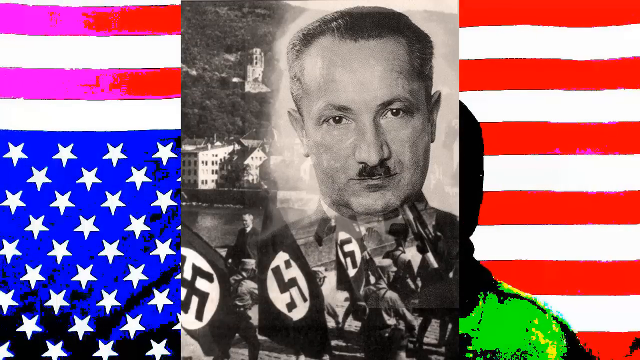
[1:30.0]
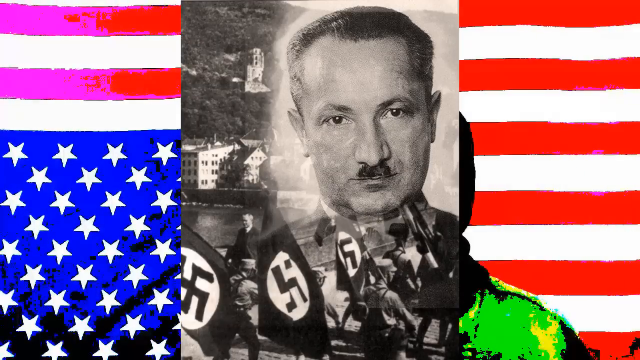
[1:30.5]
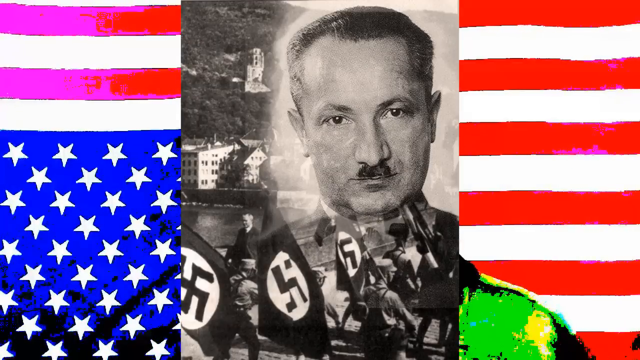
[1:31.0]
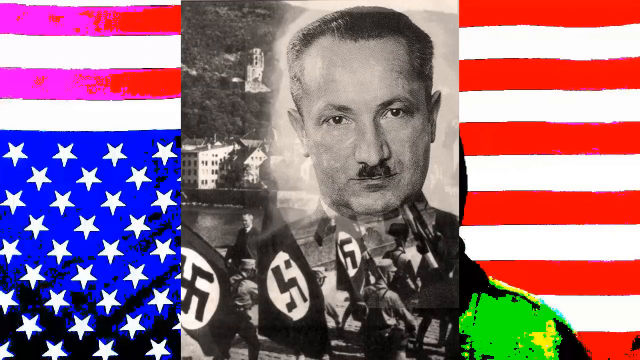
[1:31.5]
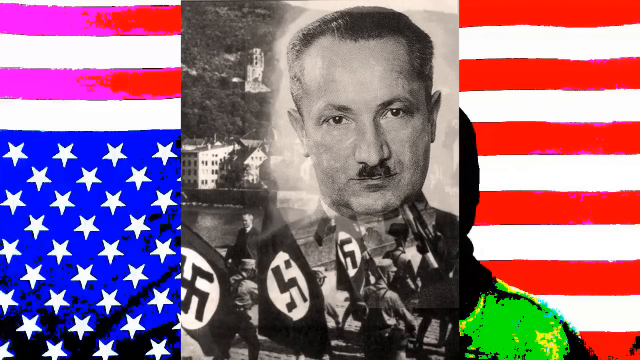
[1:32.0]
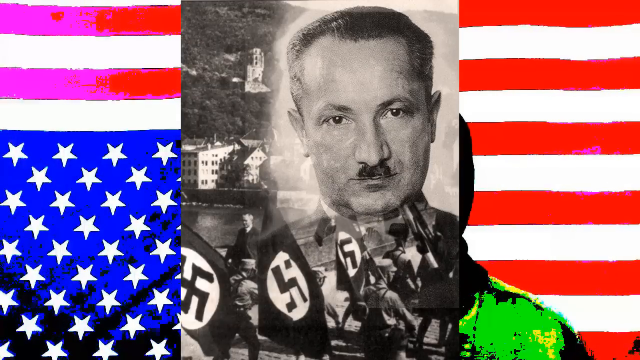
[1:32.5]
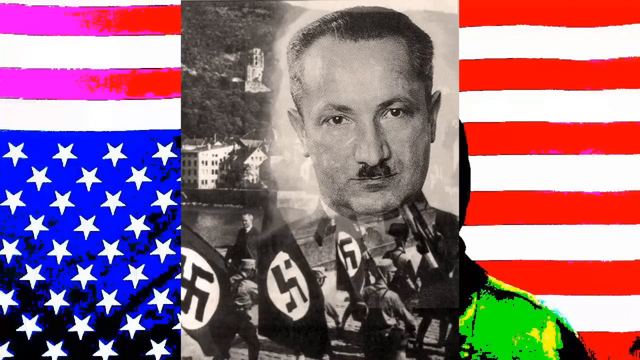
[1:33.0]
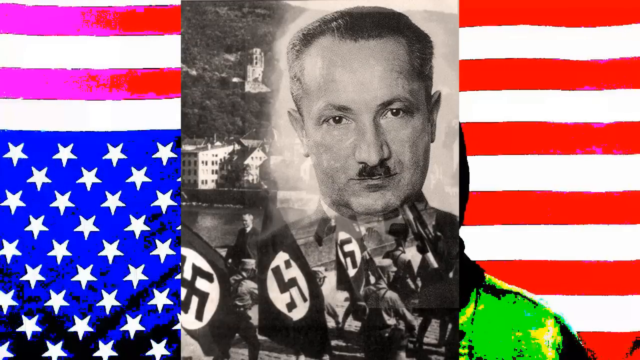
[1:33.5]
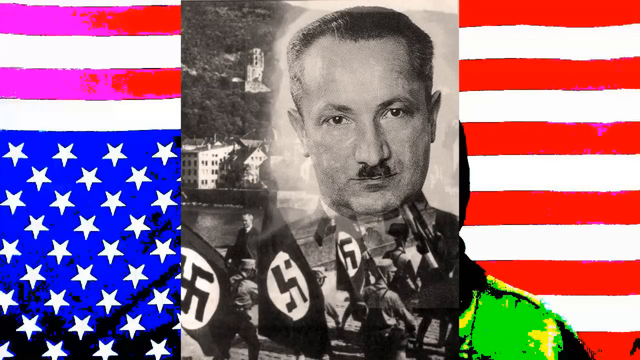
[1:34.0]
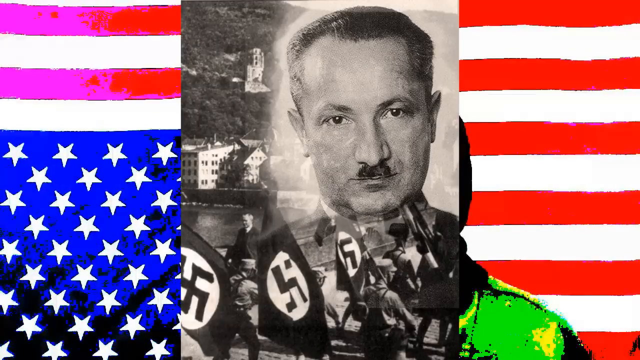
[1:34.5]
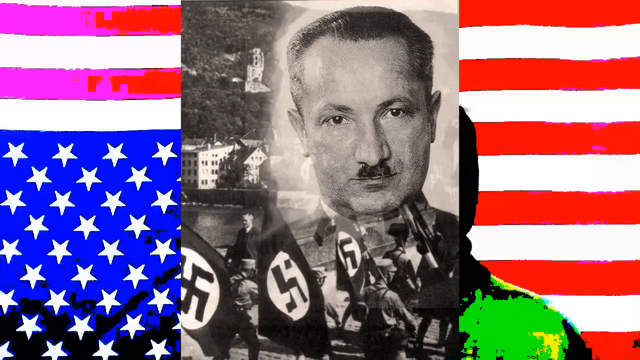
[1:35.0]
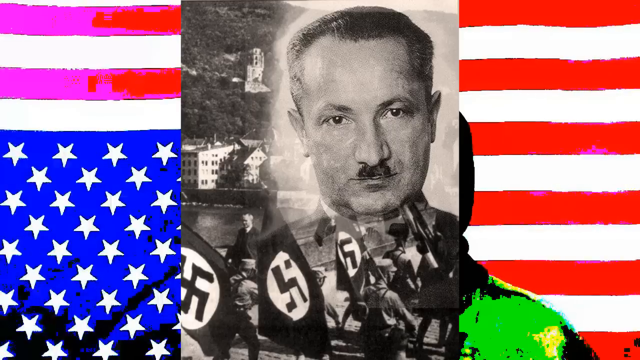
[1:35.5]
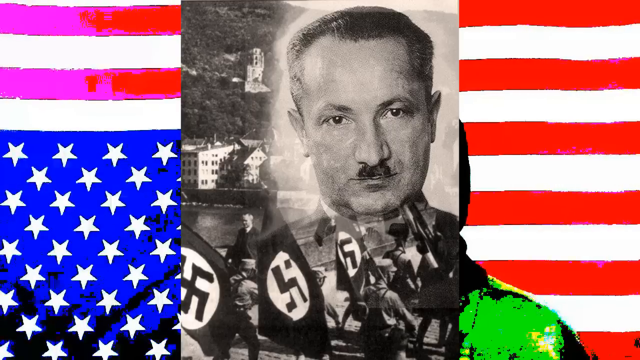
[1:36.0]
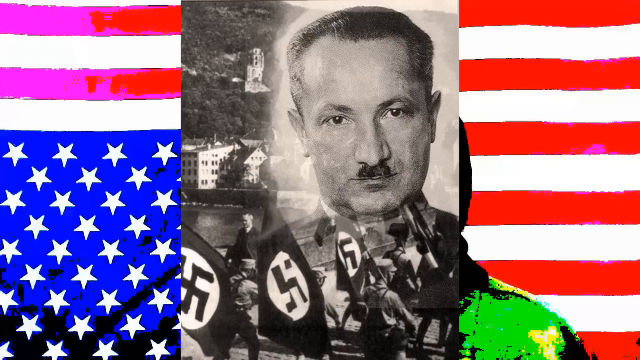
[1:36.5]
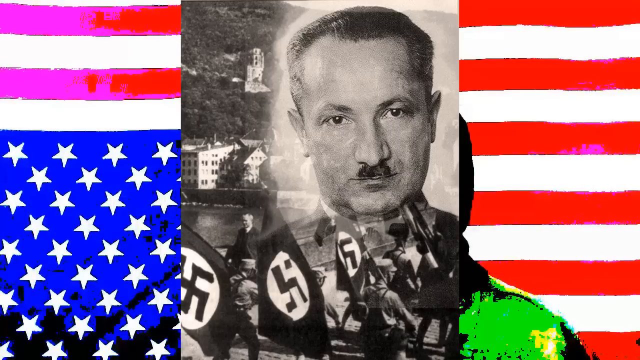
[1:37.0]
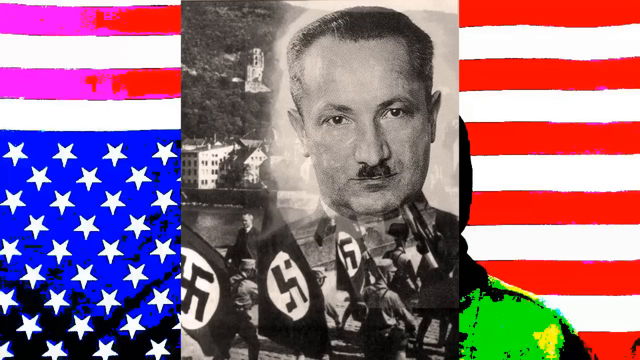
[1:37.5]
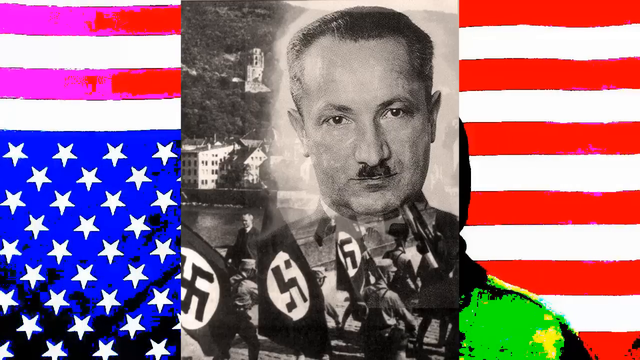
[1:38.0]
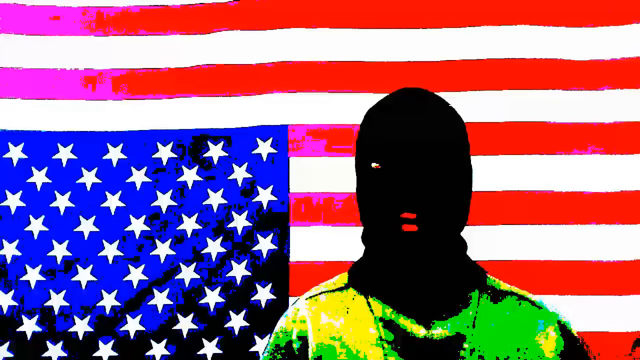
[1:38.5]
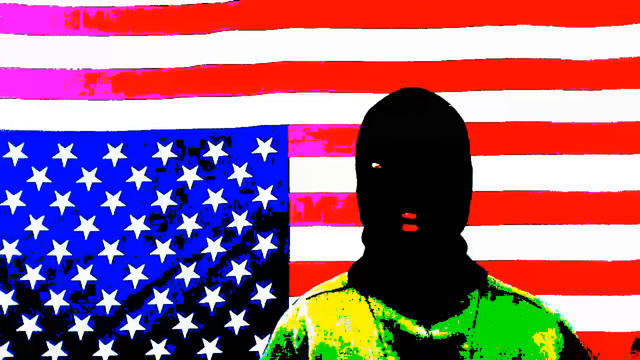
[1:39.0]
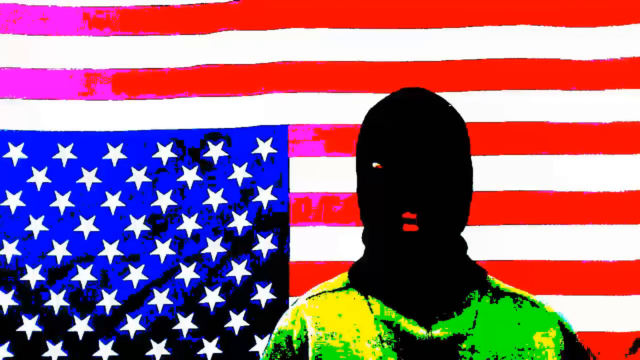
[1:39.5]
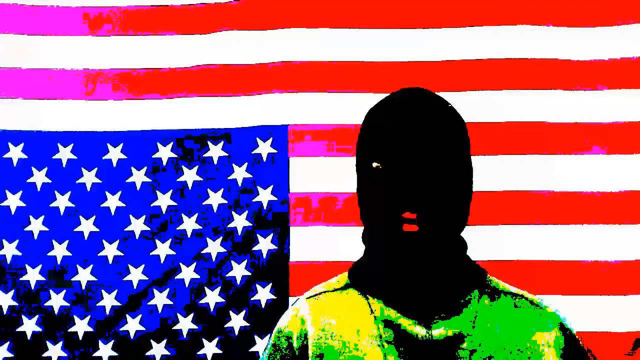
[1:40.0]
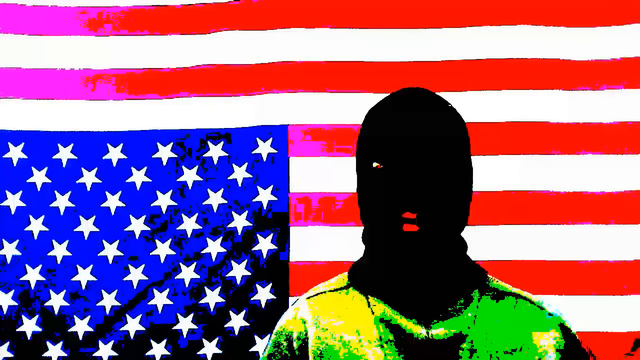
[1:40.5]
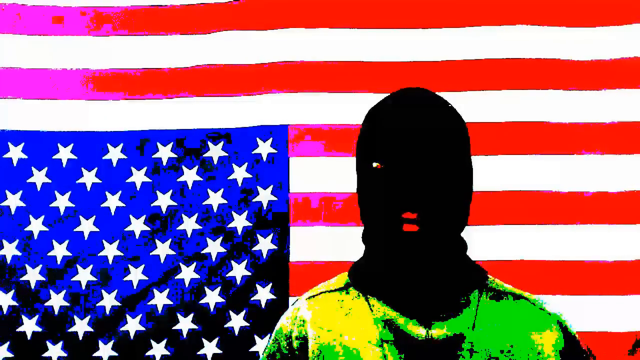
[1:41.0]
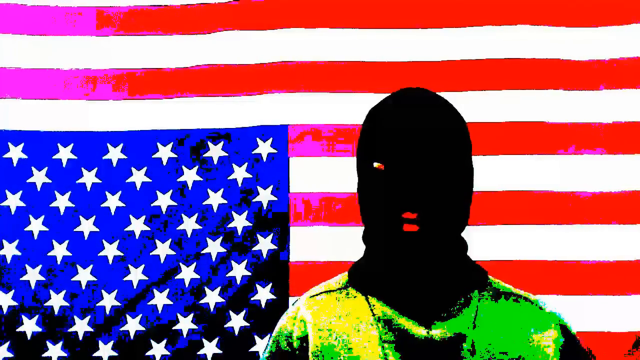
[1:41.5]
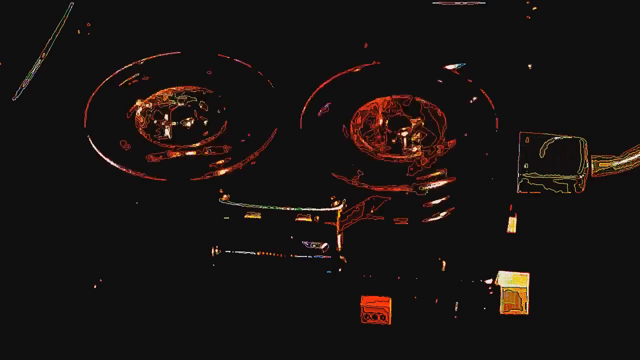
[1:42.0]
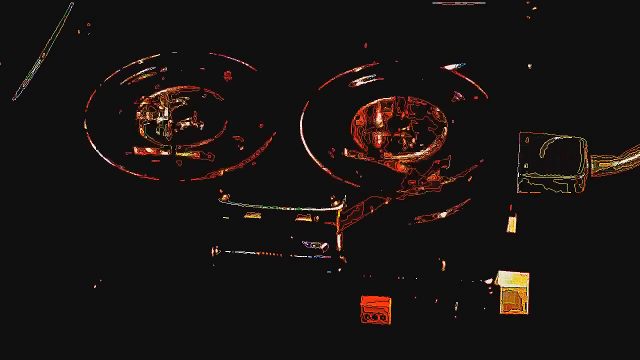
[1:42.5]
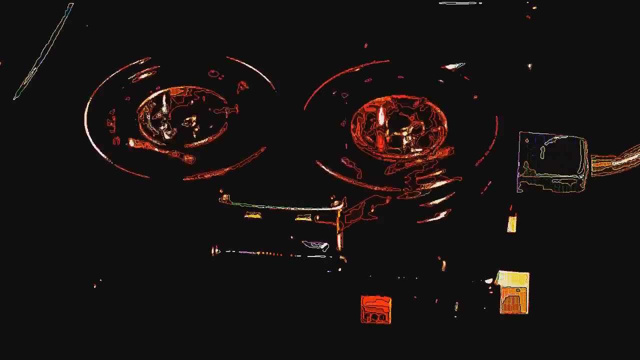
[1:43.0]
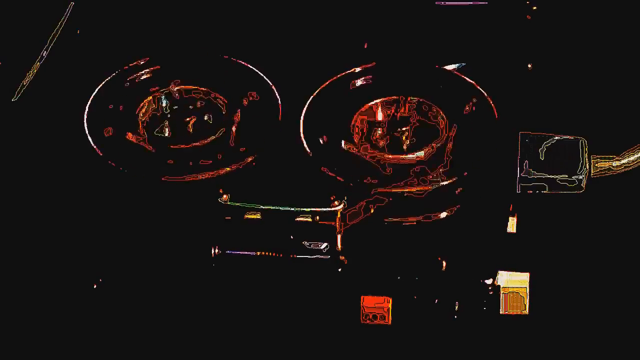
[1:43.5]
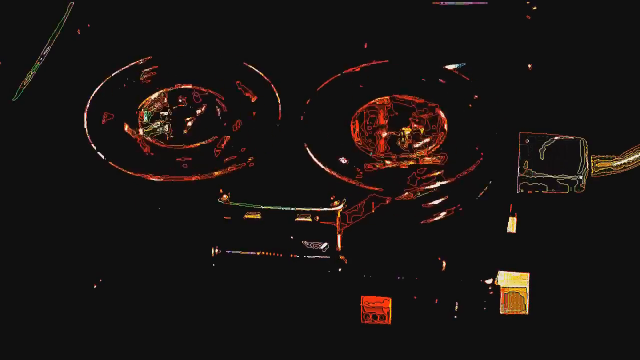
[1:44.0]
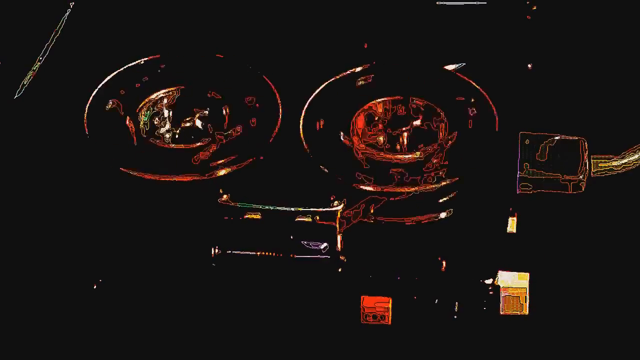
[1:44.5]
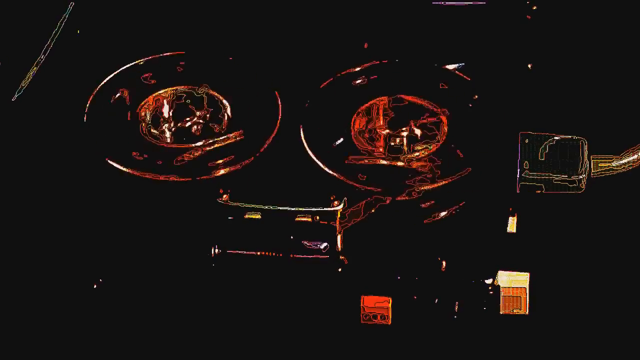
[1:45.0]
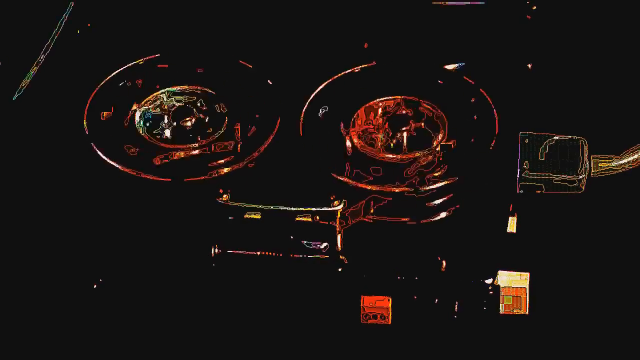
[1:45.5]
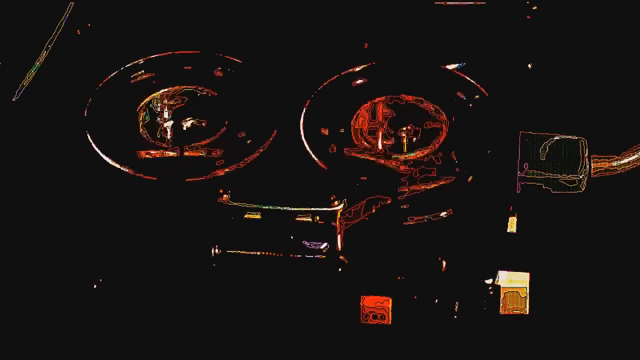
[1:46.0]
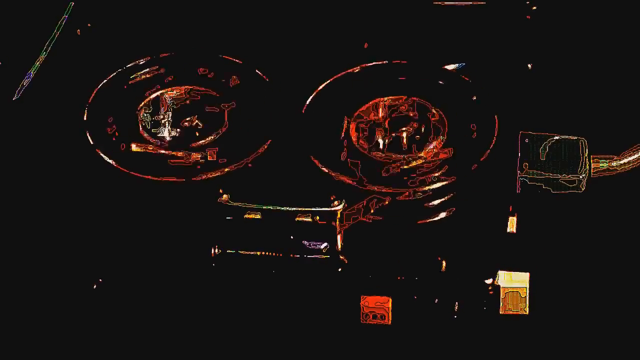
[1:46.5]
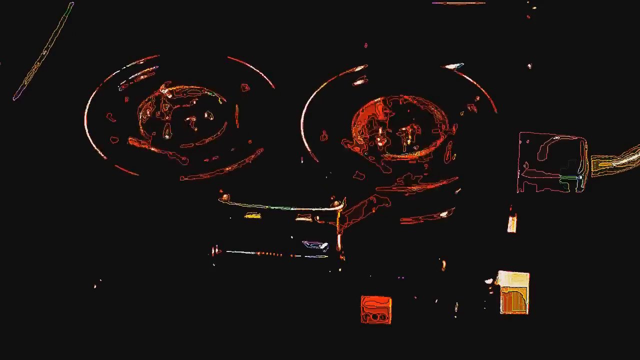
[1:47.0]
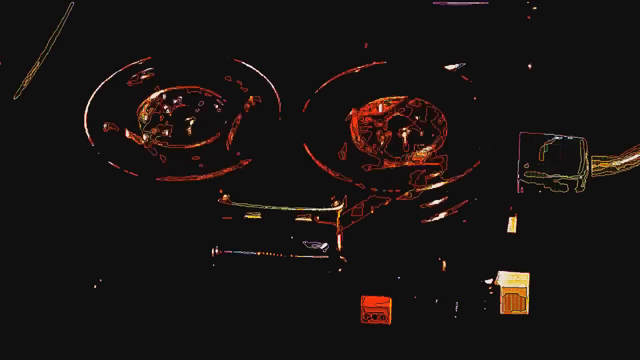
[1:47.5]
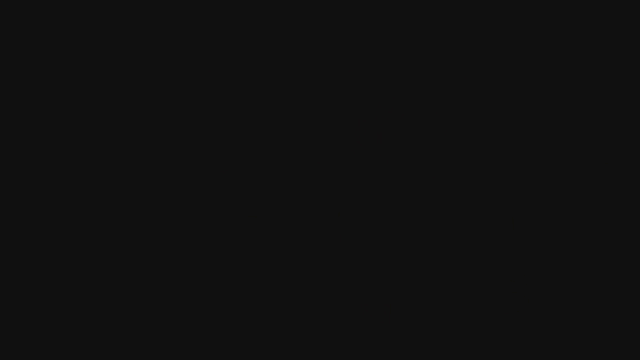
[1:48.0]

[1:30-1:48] A photo of a man with a Nazi mustache is superimposed on a different photo showing numerous Nazi flags along the waterfront, with two buildings on the waterfront and one on the slope going upward behind it. The background of the video is an upside-down American flag with colors shifting on its left side. After the photo is removed, the man in the black ski mask is visible, his lips and eyes showing, wearing a neon shirt. The video then cuts to footage of an operating tape recorder or tape player, with both spools spinning counterclockwise. This footage shows the same kind of odd color shifting, or shifting of the image, that is present when the upside-down American flag is shown.